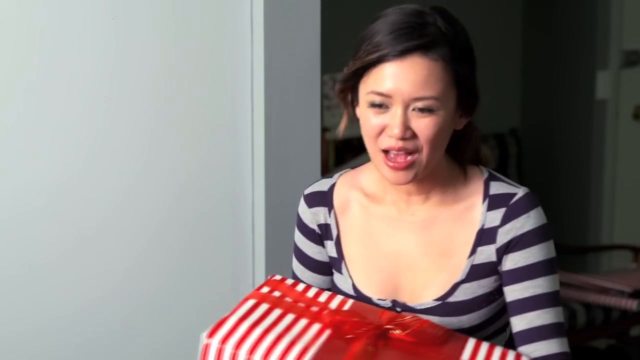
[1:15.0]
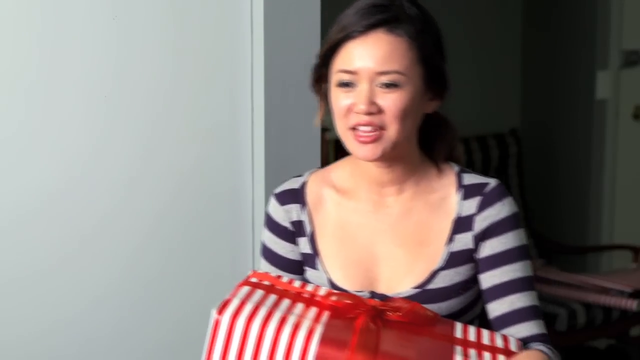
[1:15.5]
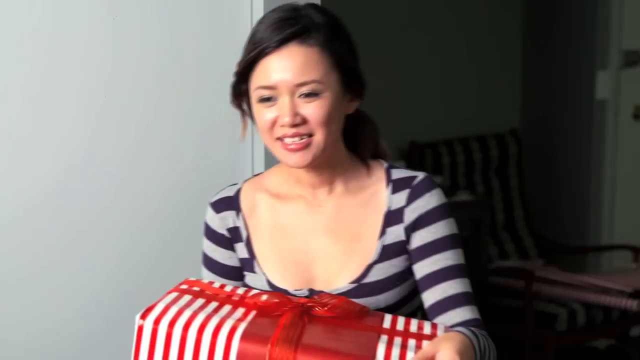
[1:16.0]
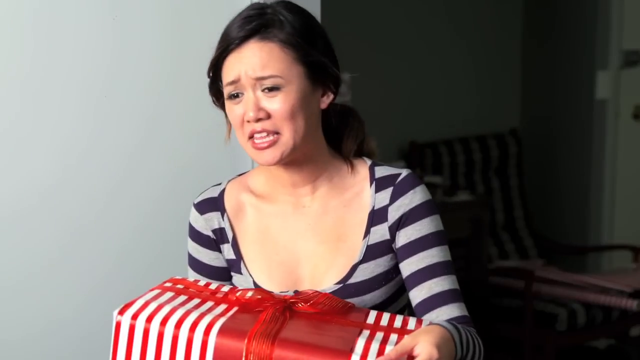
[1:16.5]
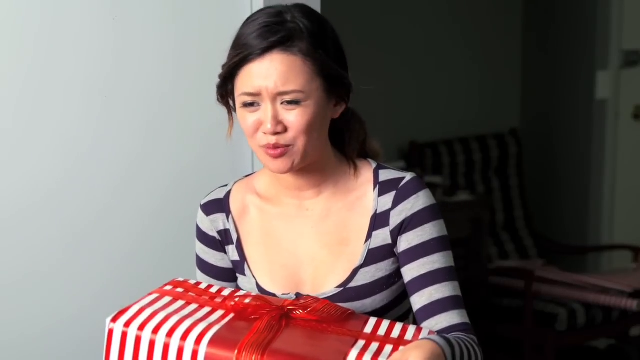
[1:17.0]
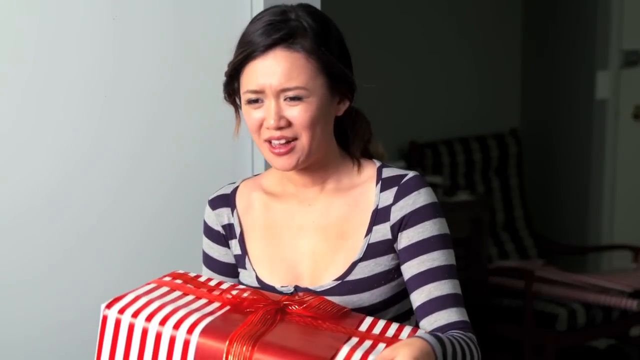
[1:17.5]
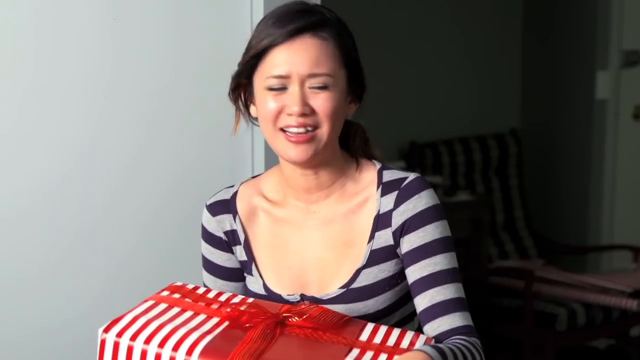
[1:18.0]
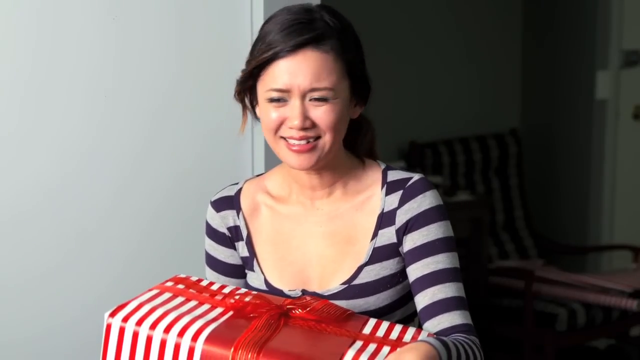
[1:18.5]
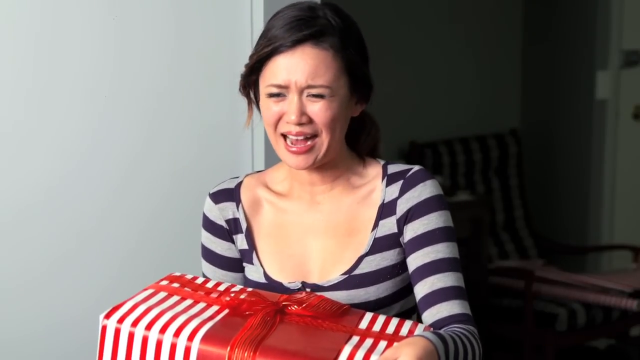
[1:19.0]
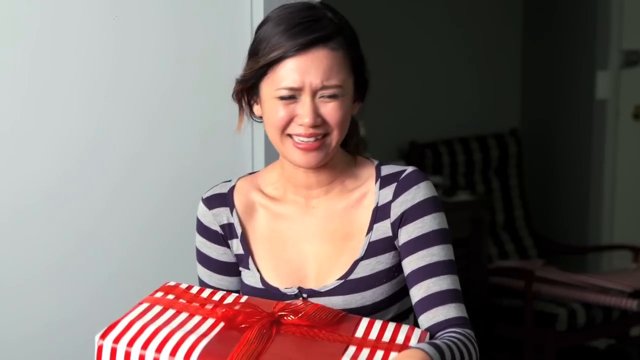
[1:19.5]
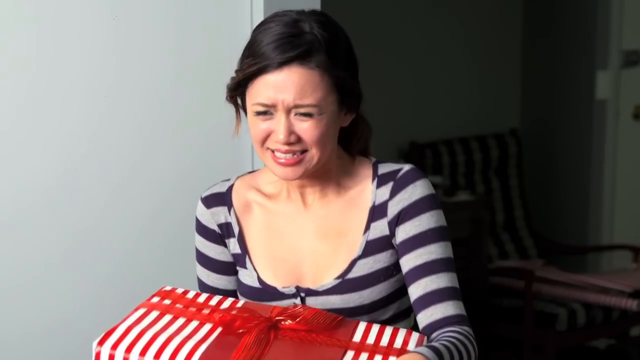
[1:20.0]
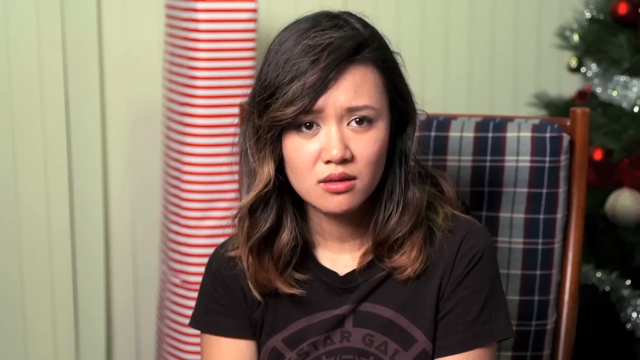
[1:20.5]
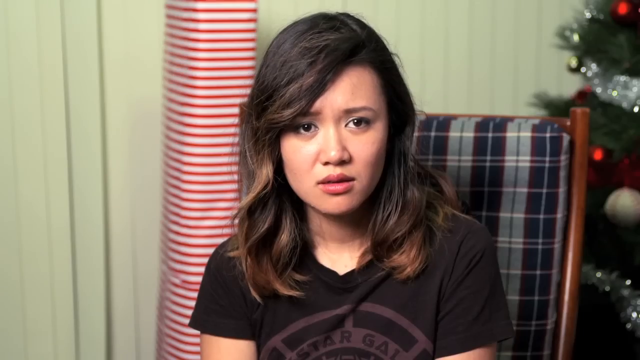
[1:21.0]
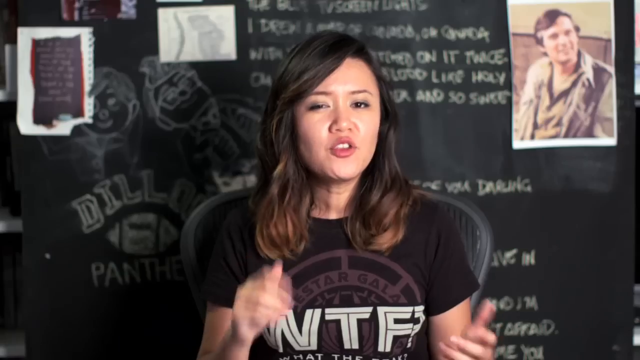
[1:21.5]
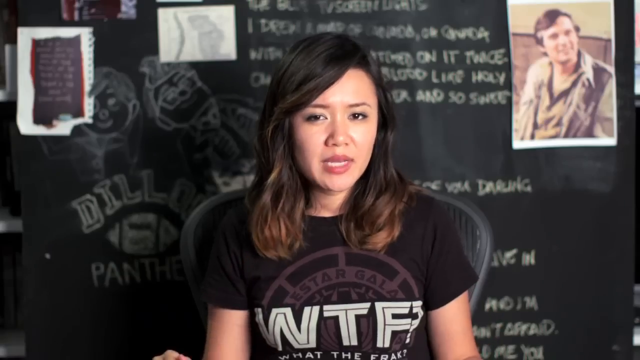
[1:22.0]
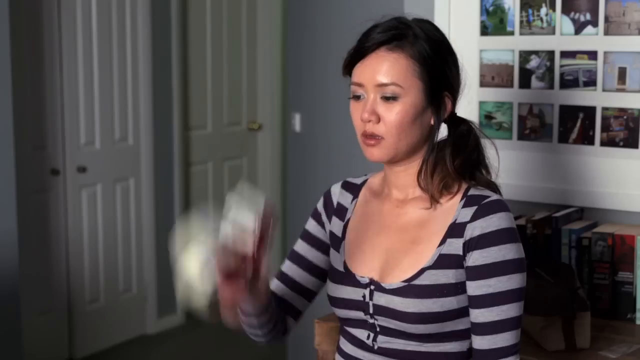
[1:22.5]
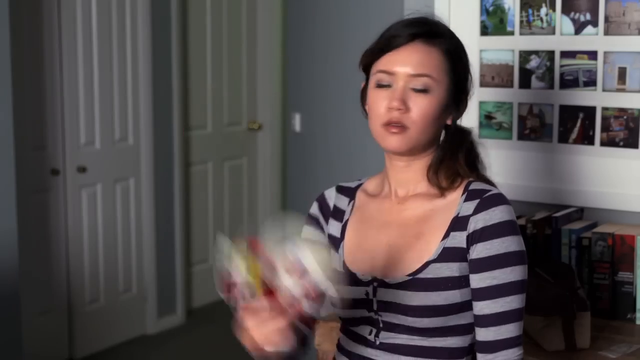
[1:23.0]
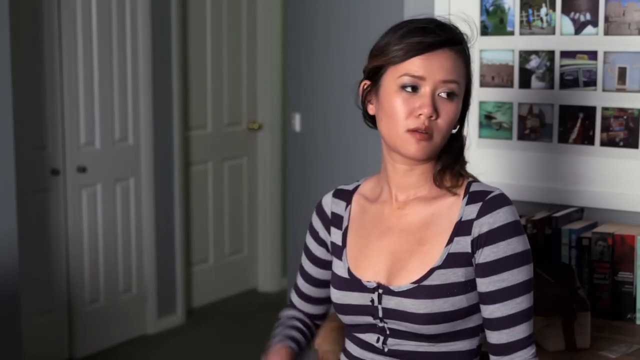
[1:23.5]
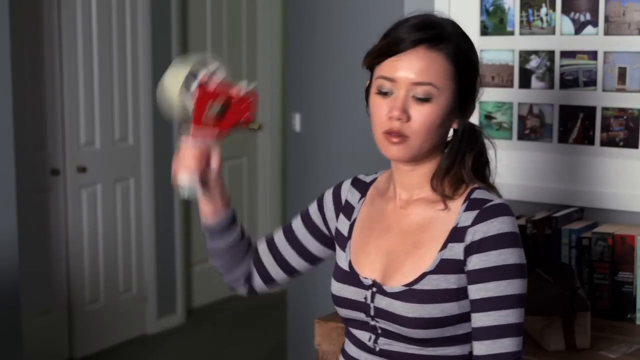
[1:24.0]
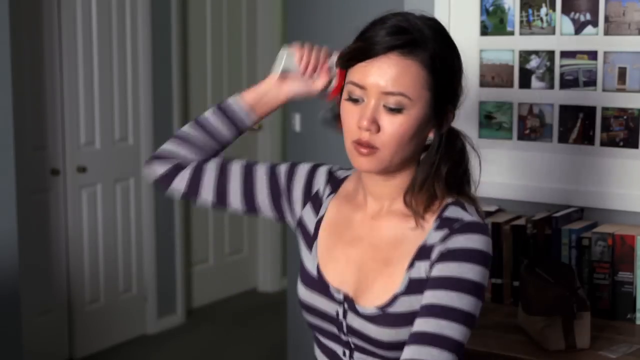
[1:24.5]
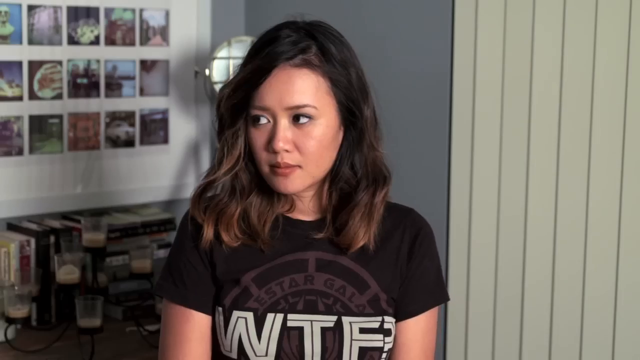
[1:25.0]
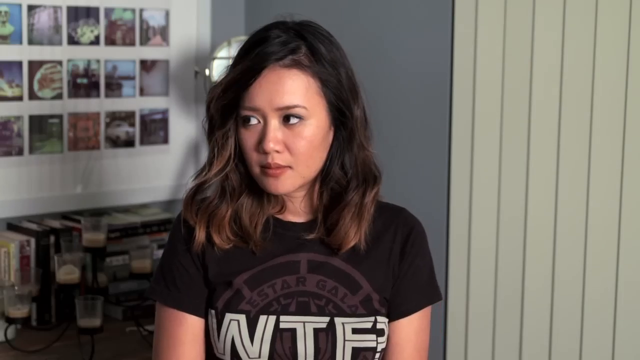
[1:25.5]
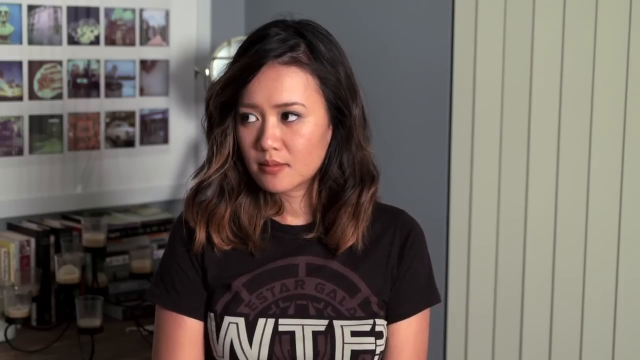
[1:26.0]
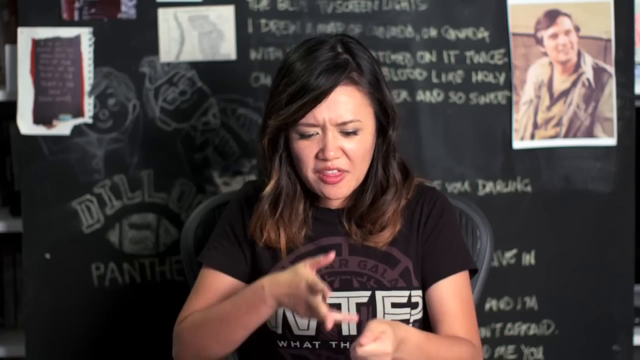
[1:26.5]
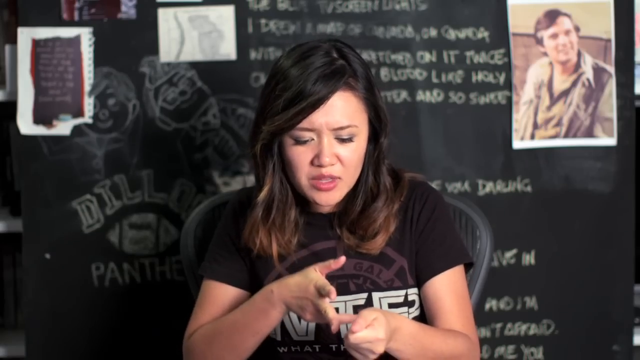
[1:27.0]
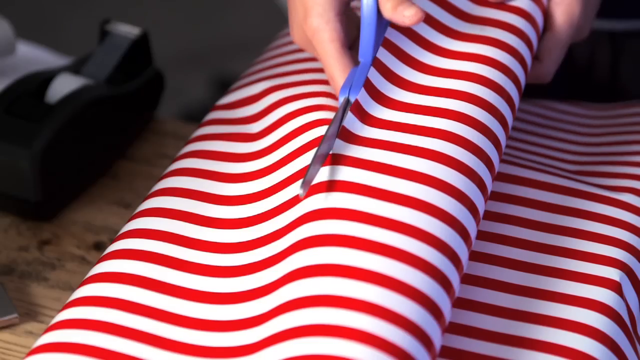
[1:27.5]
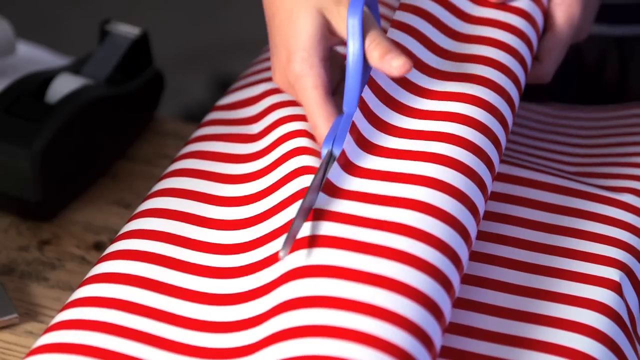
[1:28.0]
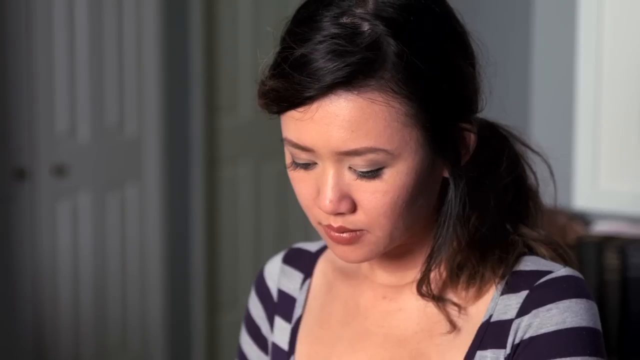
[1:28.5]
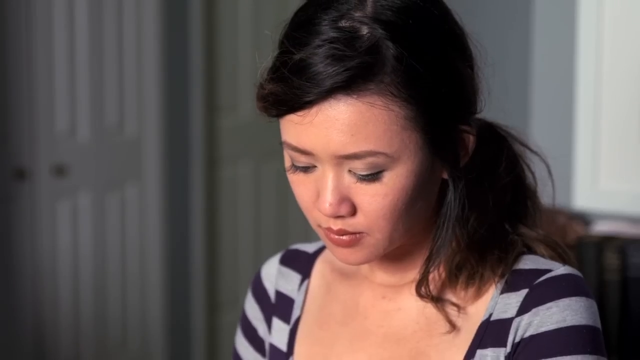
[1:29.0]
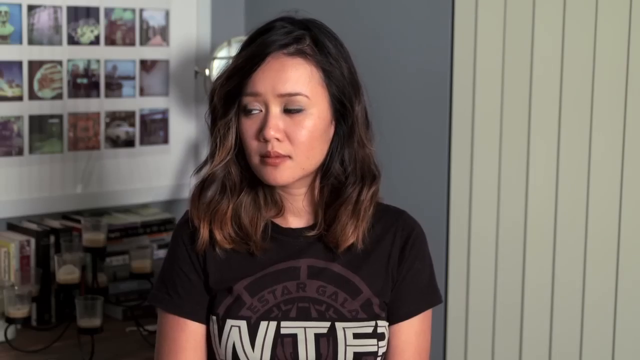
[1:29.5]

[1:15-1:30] The girl who came in later talks and looks upset, then the other girl talks. The later girl throws something down, and then wrapping paper is cut. She talks and looks very upset, as if about to cry, while the other girl talks; she tosses something in the air and kind of throws it down. Wrapping paper is cut again. The upset girl, in the striped gray and black shirt, is holding what looks like a tape dispenser, kind of holding it and tossing it around. The shots keep going back and forth between the two girls and the wrapping paper, with the one girl looking upset and about to cry; a chair is in the background behind her. The circle picture remains on the left-hand side, and "watch later" and "share" remain on the upper right-hand side.